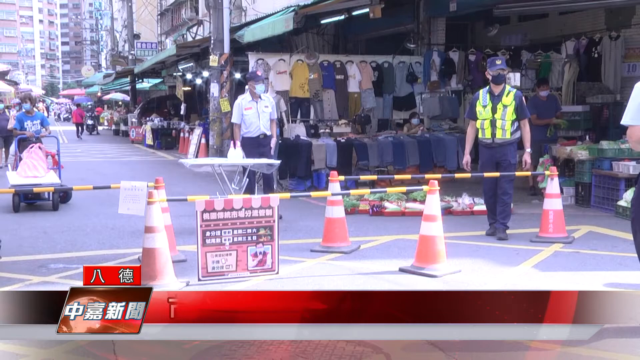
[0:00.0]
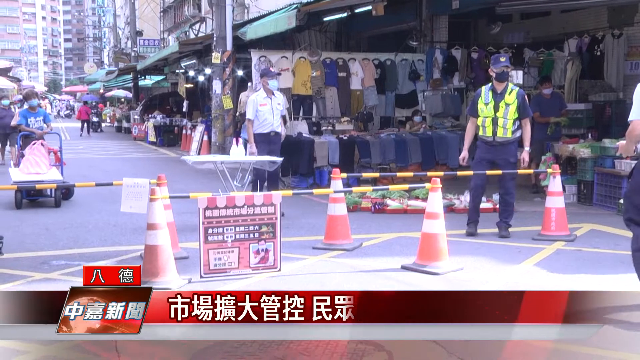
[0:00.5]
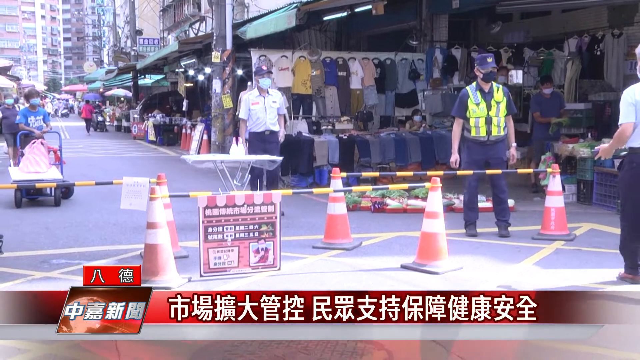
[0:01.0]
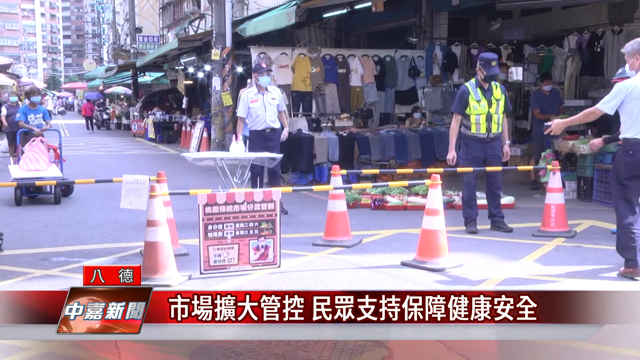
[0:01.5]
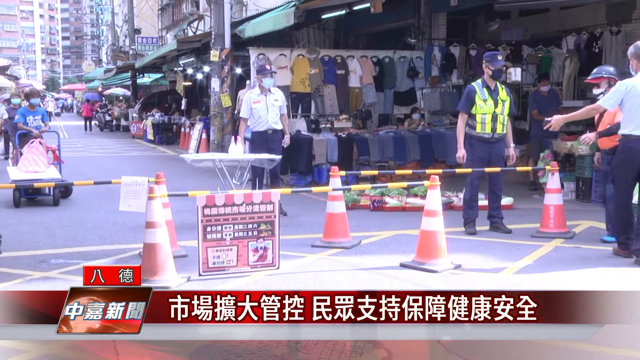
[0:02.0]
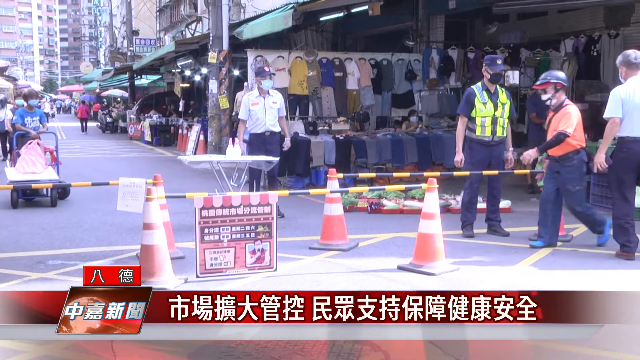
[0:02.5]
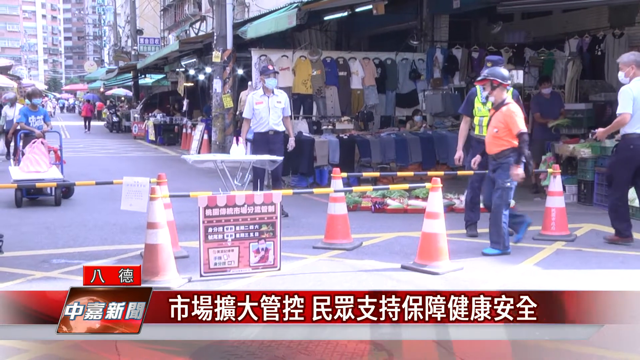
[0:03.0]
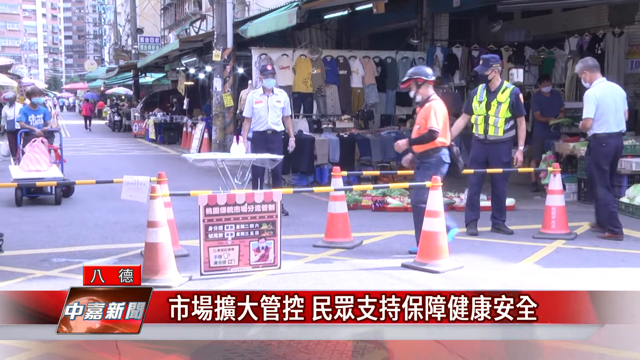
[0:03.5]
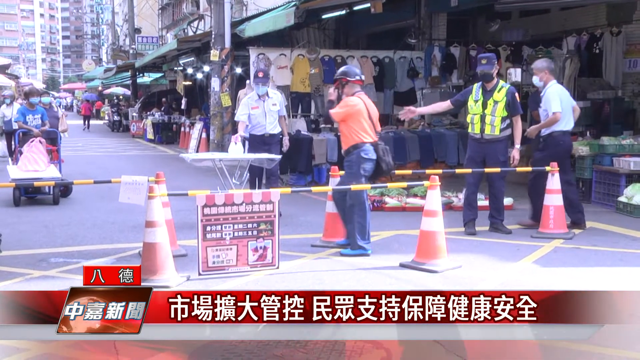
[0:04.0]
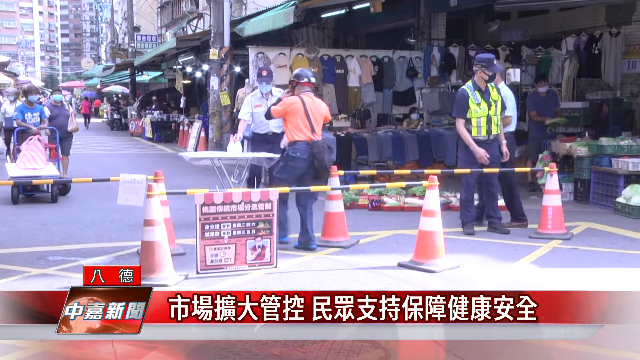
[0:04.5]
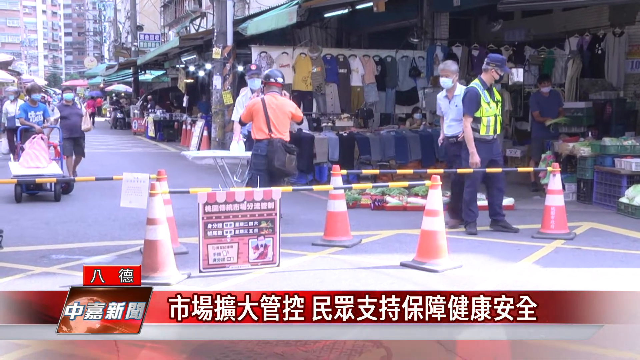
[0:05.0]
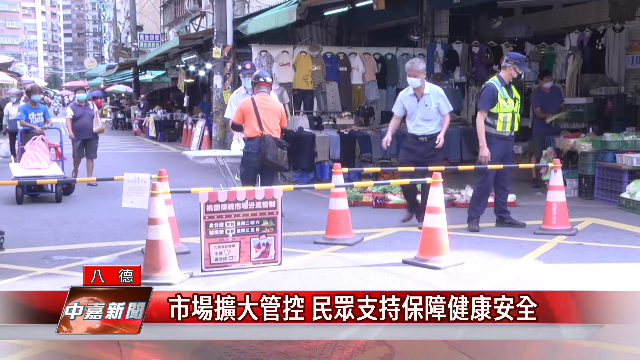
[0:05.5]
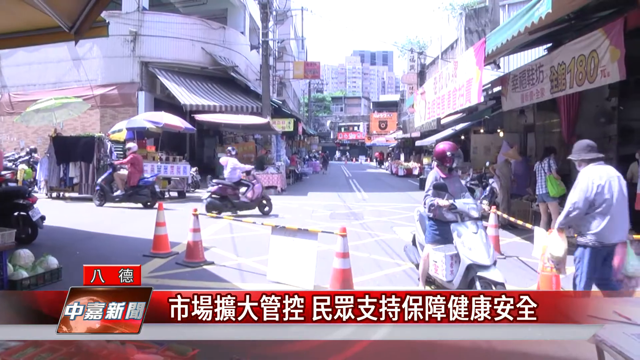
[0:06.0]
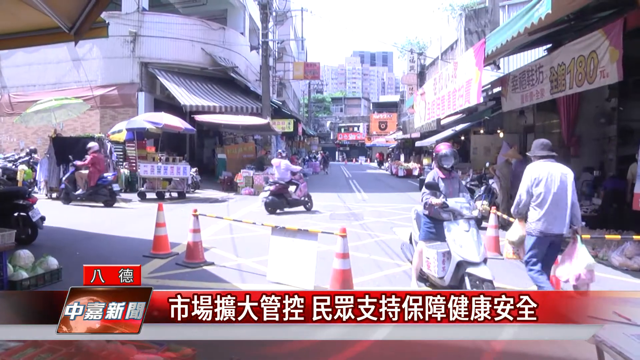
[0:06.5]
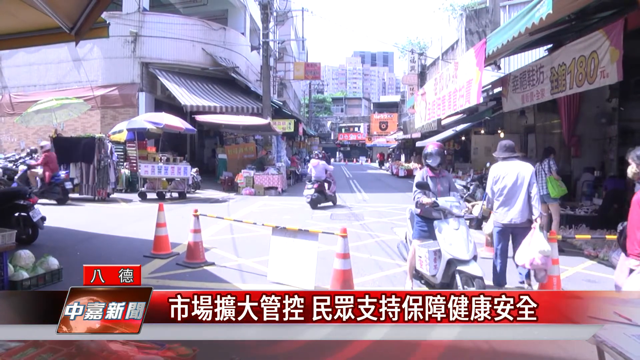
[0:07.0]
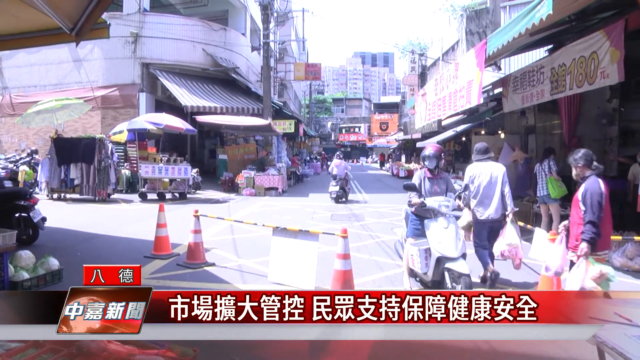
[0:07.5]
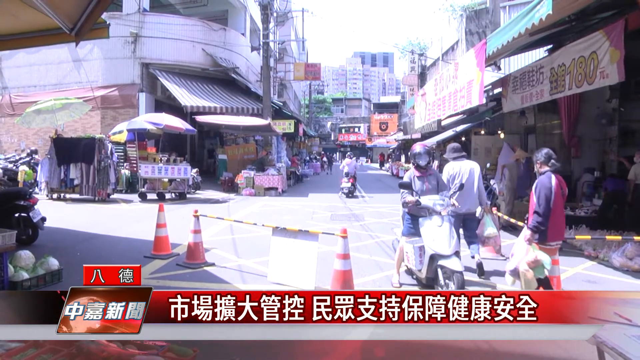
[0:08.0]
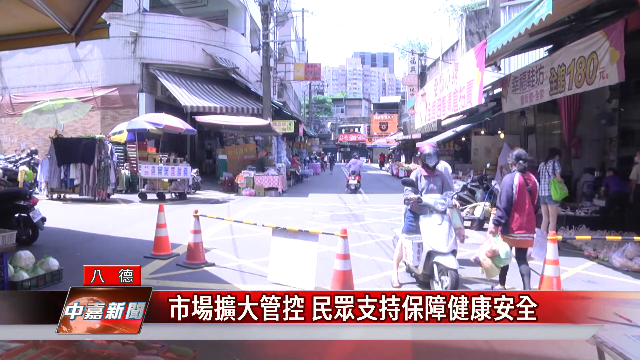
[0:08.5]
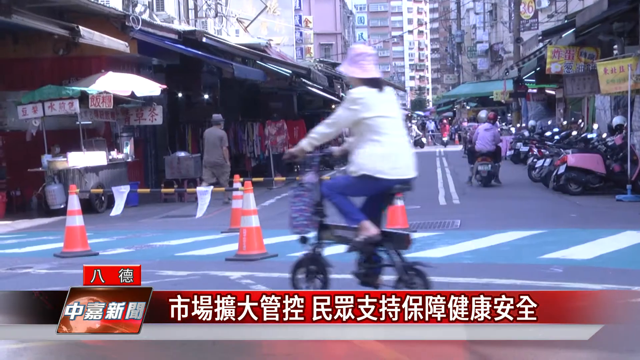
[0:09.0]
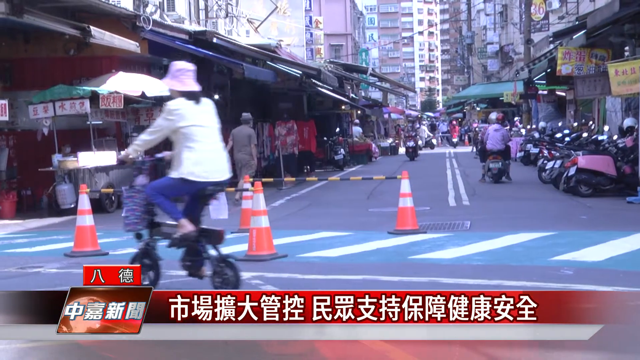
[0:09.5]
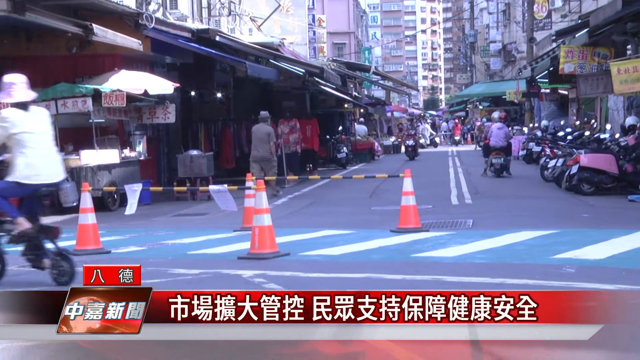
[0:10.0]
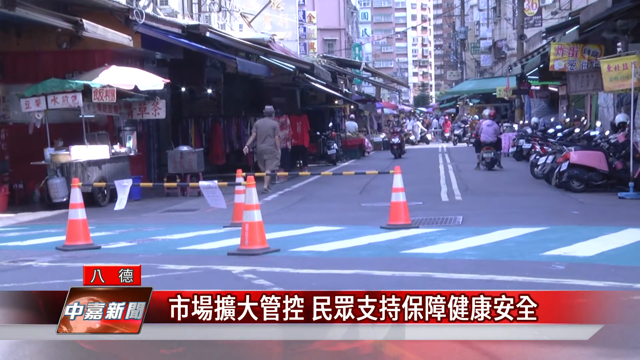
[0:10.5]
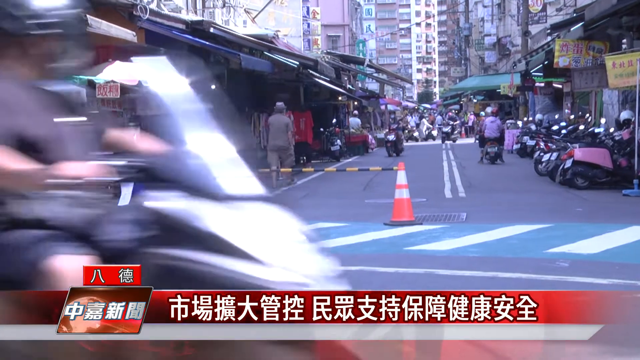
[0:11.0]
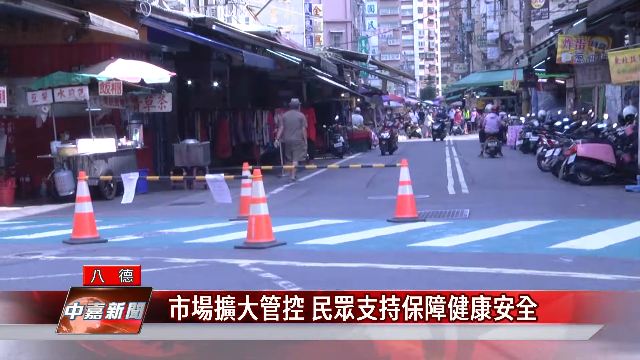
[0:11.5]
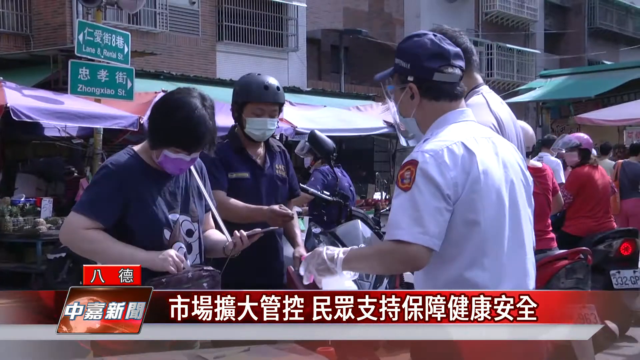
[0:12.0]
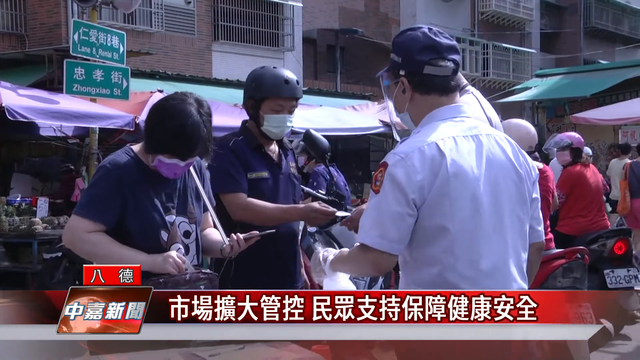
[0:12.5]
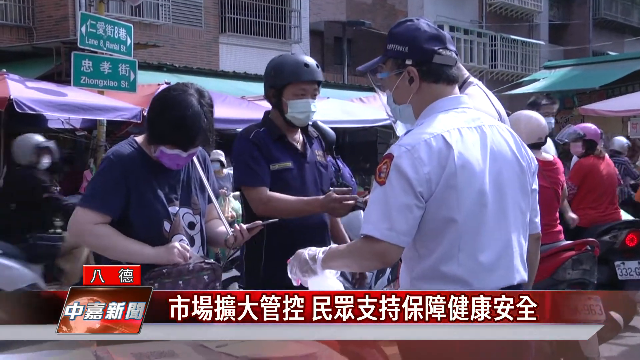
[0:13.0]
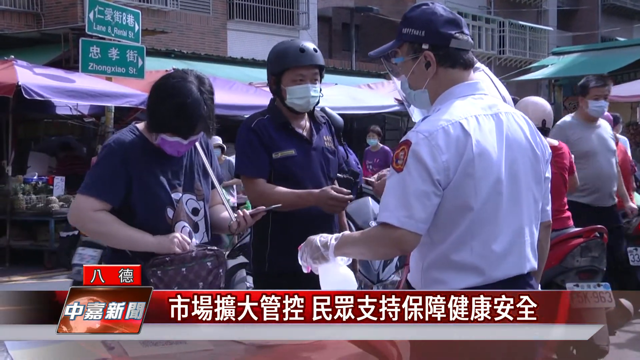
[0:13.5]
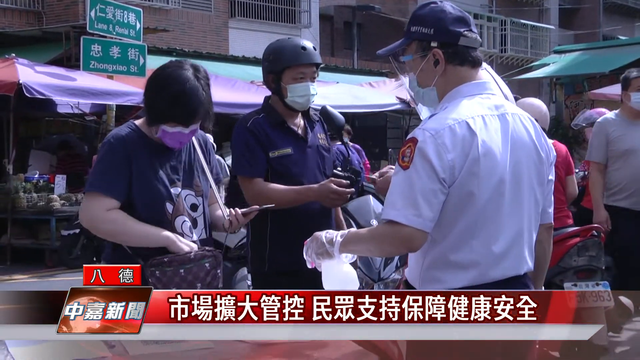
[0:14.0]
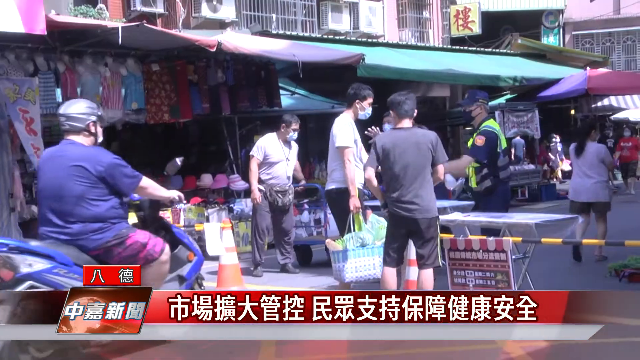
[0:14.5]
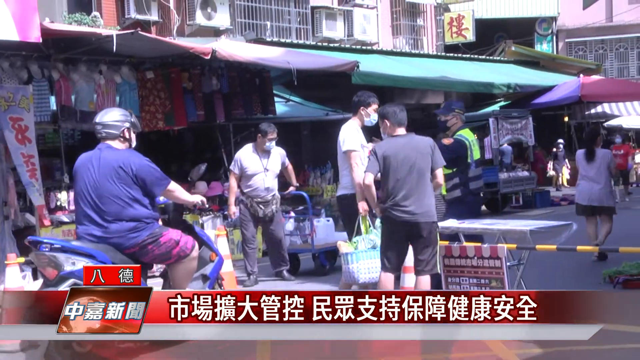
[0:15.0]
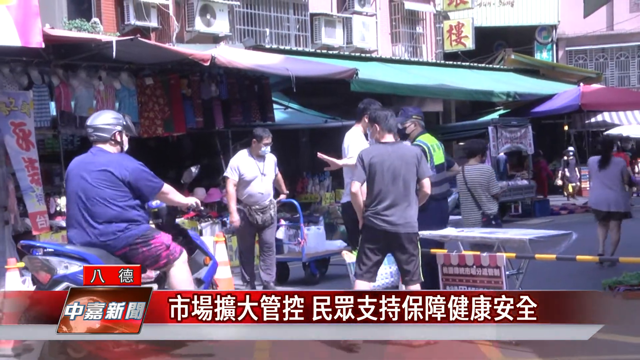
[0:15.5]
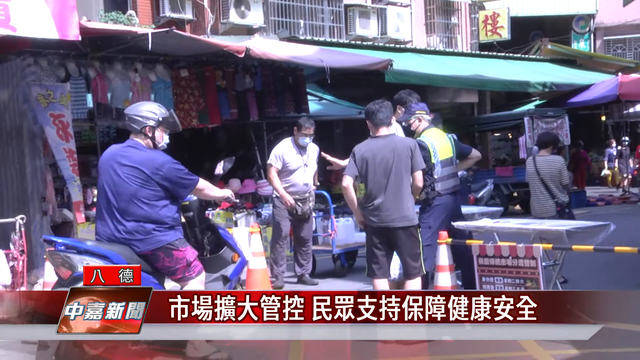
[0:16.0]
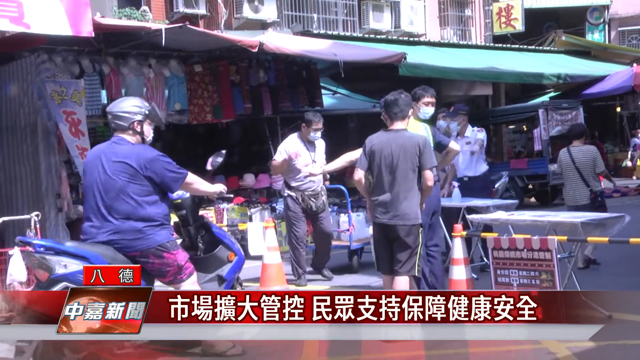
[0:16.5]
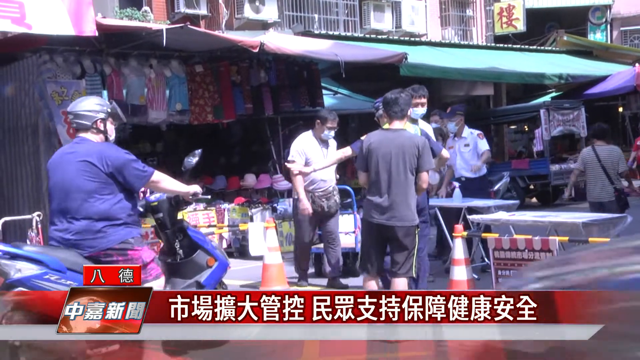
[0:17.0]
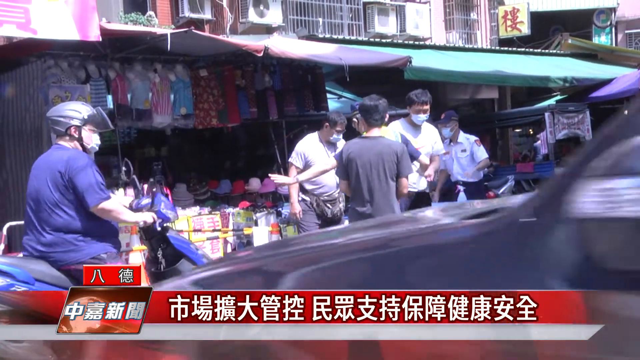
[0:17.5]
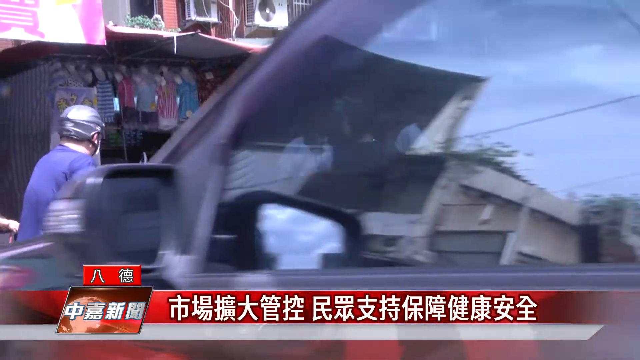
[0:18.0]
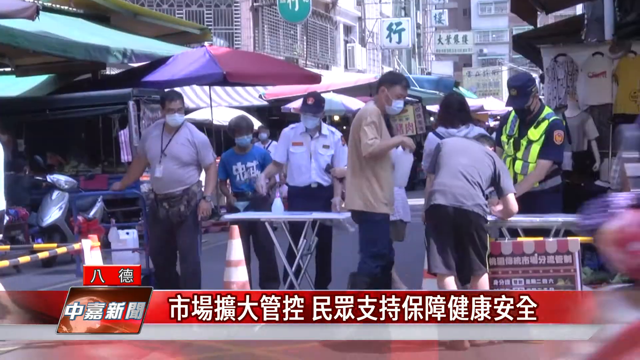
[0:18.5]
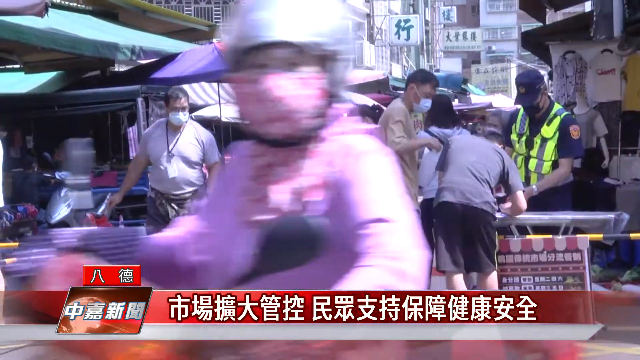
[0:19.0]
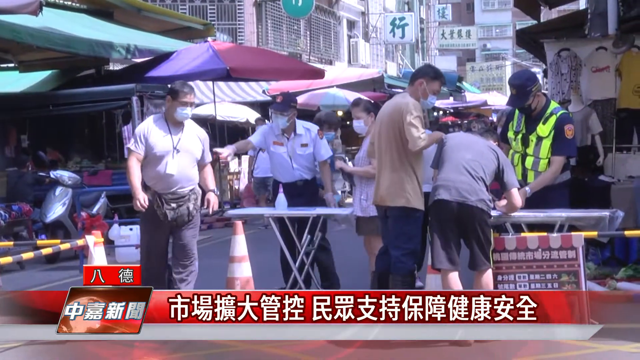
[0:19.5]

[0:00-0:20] A red and white banner runs along the bottom of the frame, with white characters in some sort of Asian language. Some men are working, apparently by an open-air market stall of some sort. A huge variety of shirts is for sale, possibly some pants as well, and green plastic containers hold items for sale. In the foreground are orange and white traffic cones and some black and yellow caution tape. The shot then transitions to an open-air market where fruits and vegetables appear to be for sale, along with clothing. Some people are wearing masks, people ride moped scooters, and people carry groceries. It looks like B-roll stock footage. The video cuts back to an employee with a patch on his shoulder who wears a mask and gloves. Someone wearing a reflective safety vest appears to be directing traffic. Various people ride mopeds and scooters, many of them wearing masks. Toward the end, someone apparently has a stretcher out, possibly. It looks like news B-roll footage of some sort.